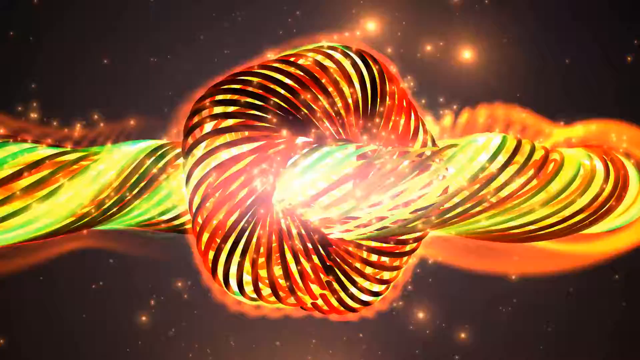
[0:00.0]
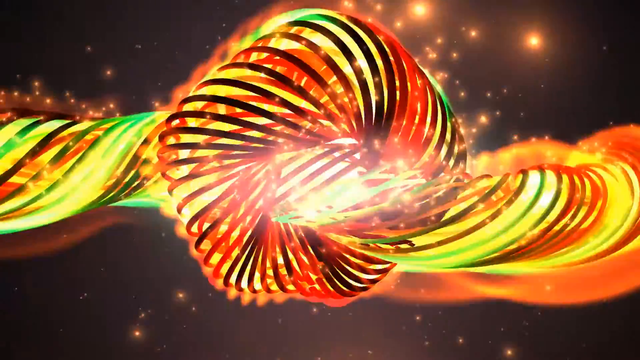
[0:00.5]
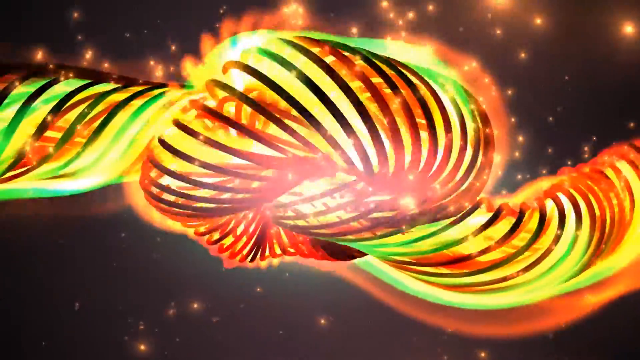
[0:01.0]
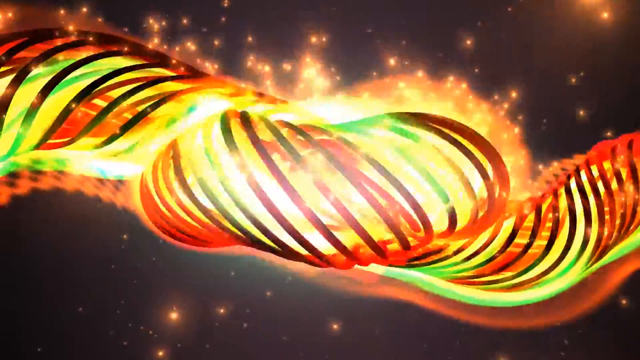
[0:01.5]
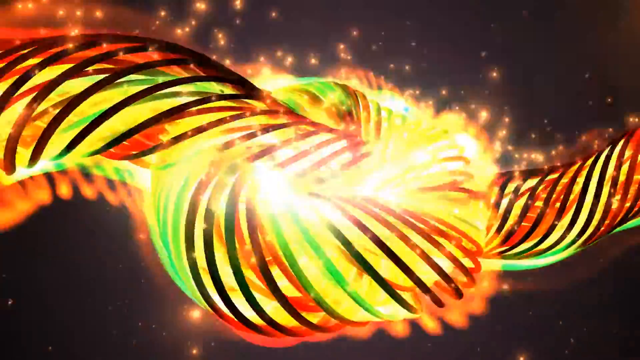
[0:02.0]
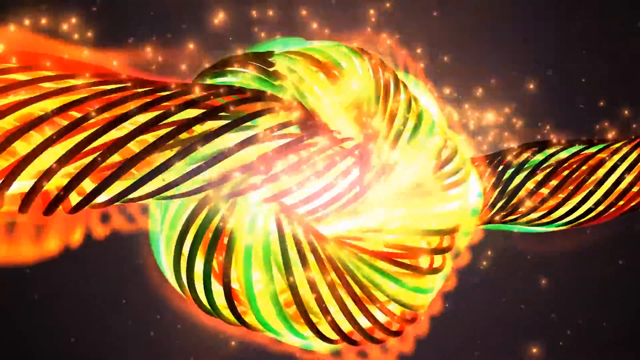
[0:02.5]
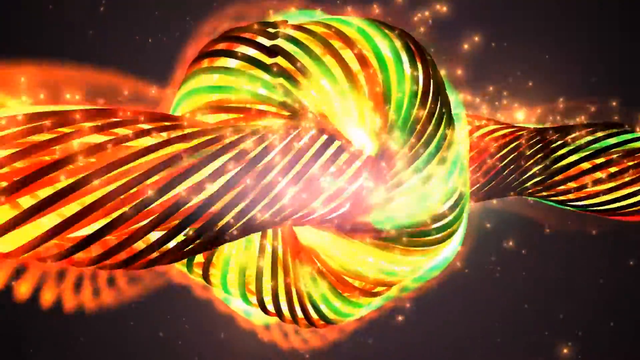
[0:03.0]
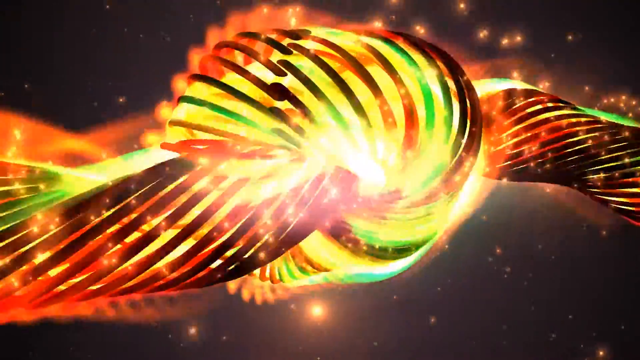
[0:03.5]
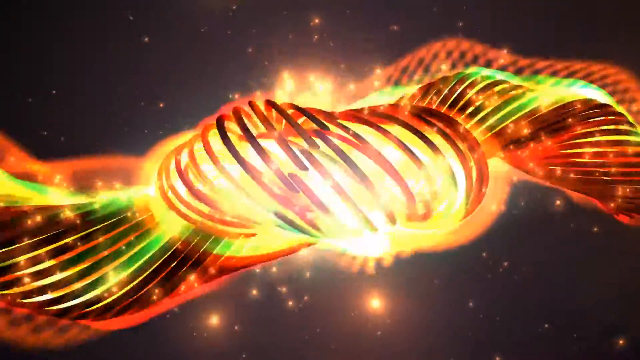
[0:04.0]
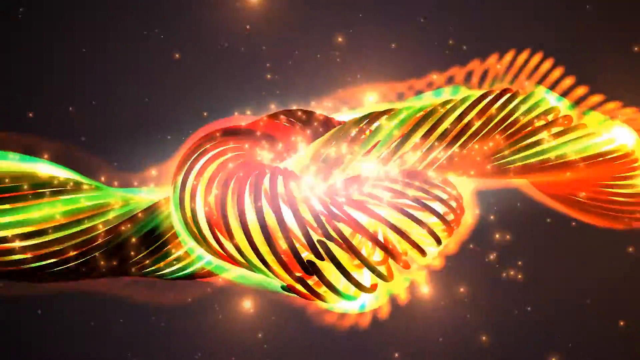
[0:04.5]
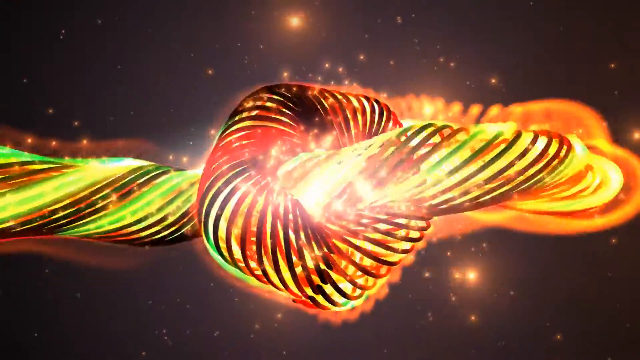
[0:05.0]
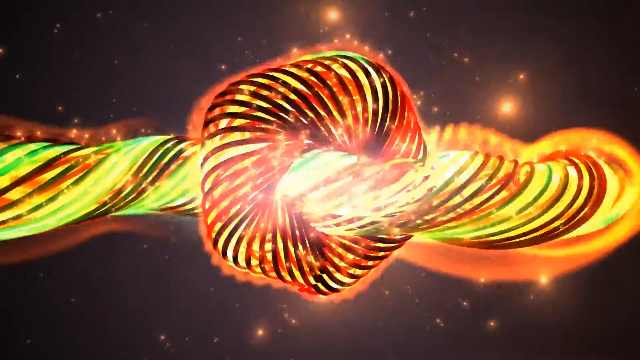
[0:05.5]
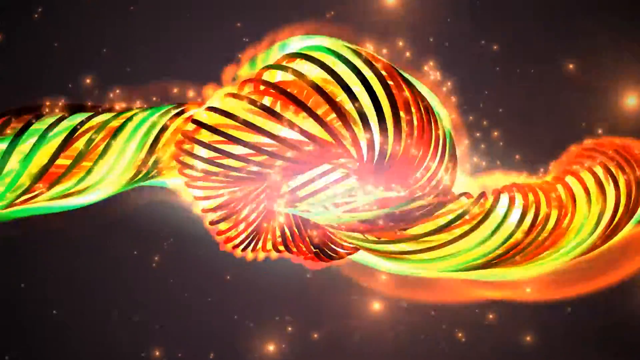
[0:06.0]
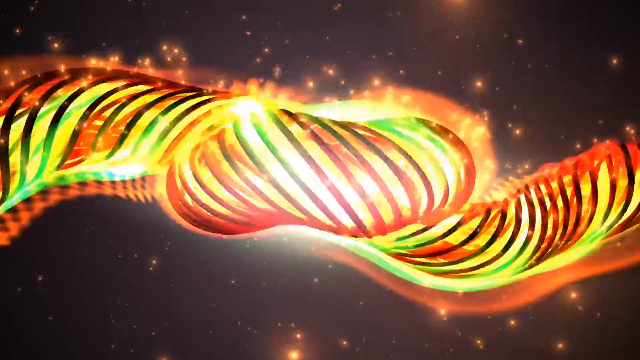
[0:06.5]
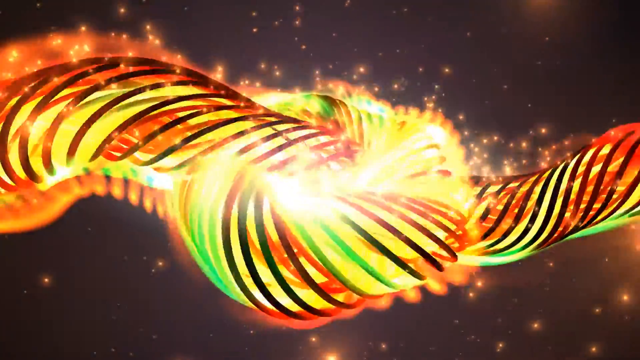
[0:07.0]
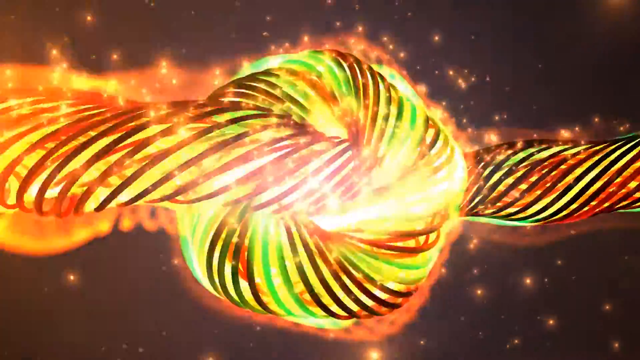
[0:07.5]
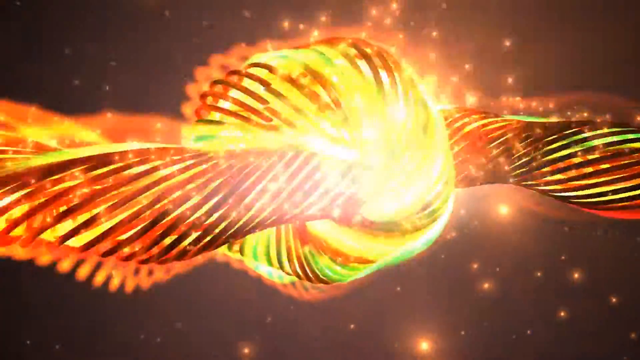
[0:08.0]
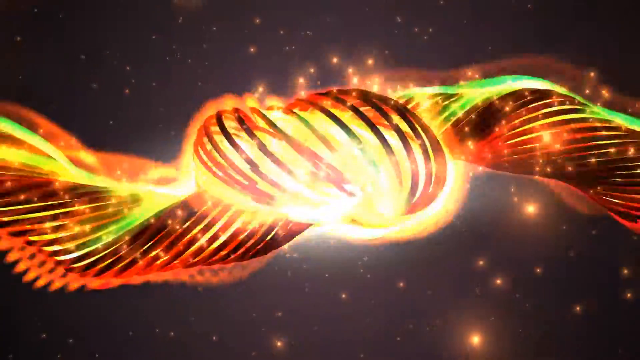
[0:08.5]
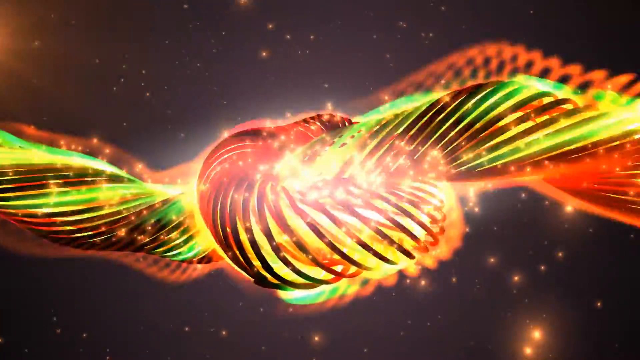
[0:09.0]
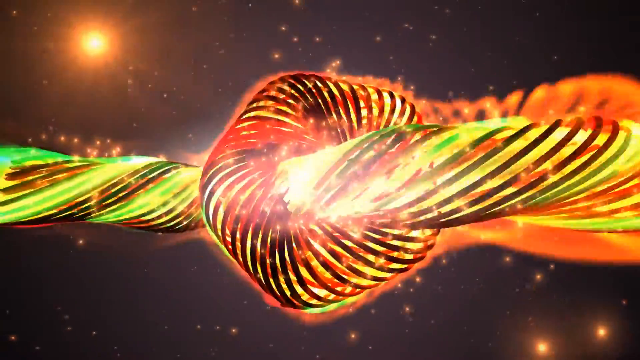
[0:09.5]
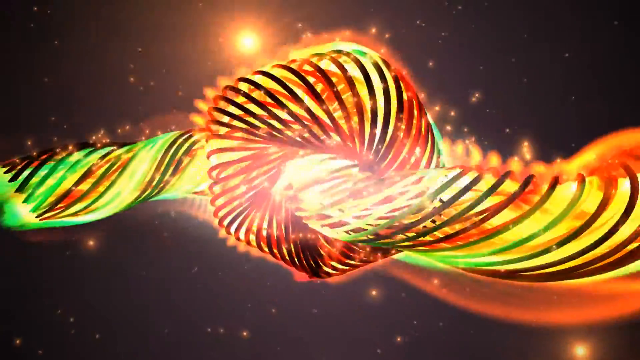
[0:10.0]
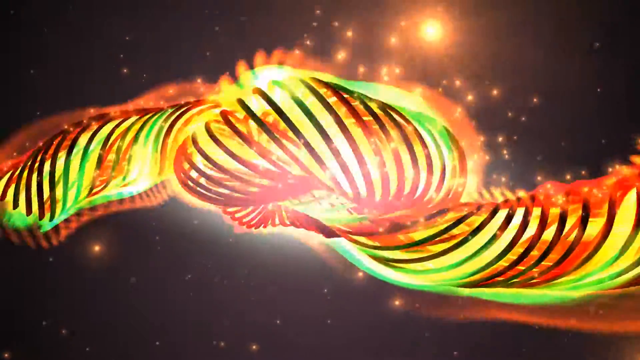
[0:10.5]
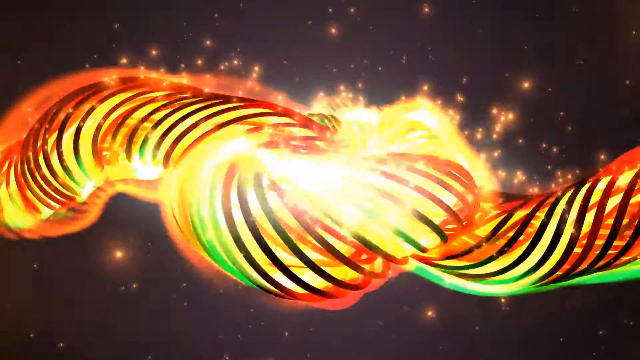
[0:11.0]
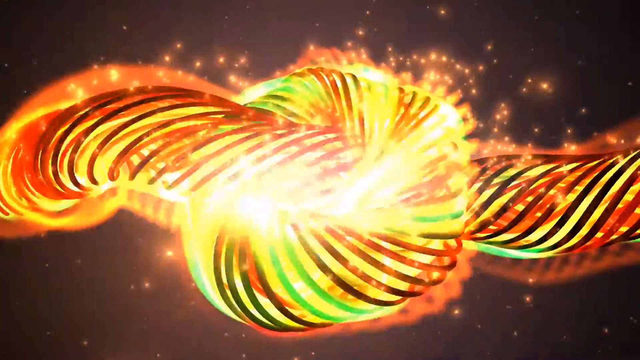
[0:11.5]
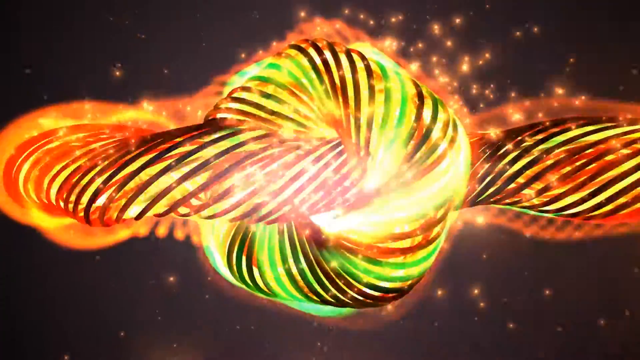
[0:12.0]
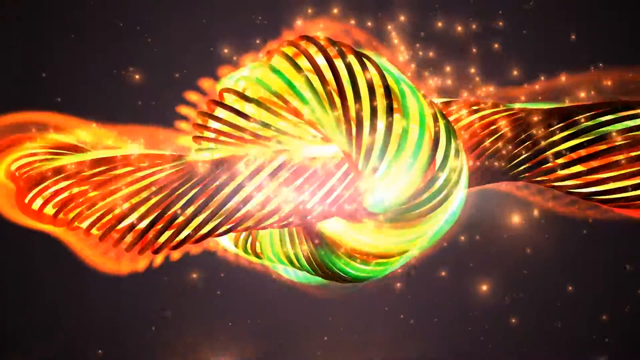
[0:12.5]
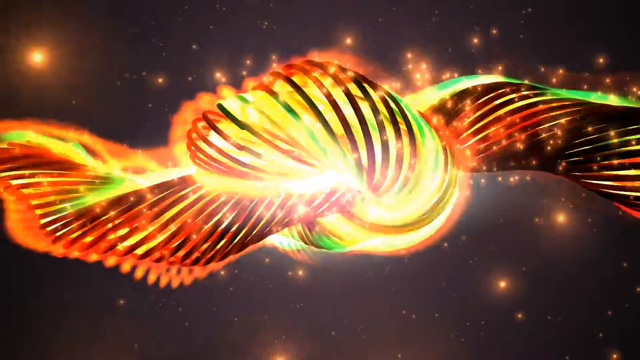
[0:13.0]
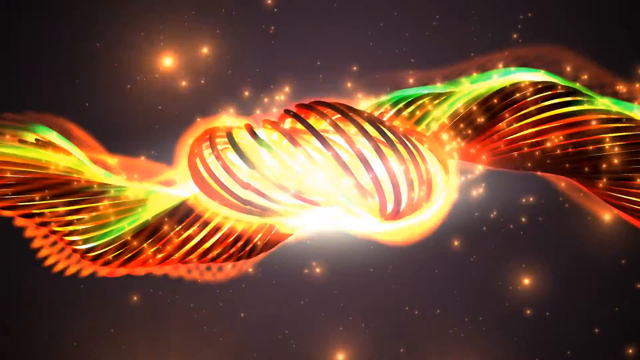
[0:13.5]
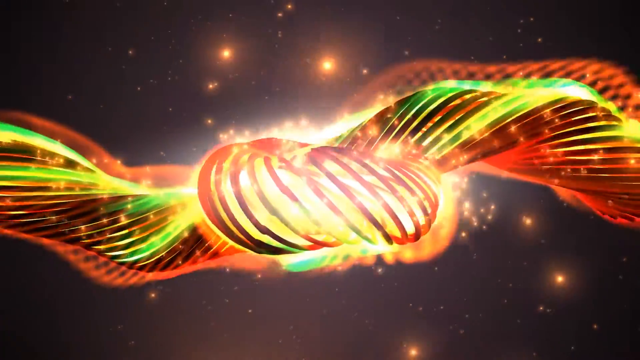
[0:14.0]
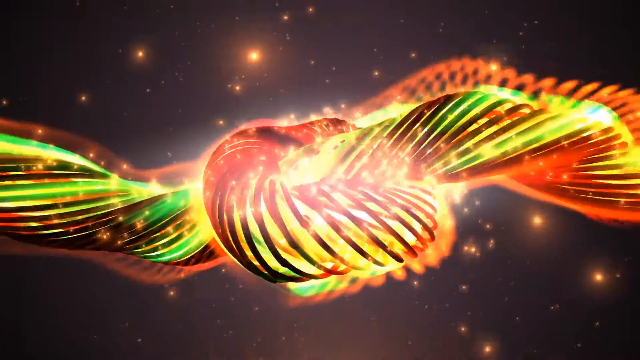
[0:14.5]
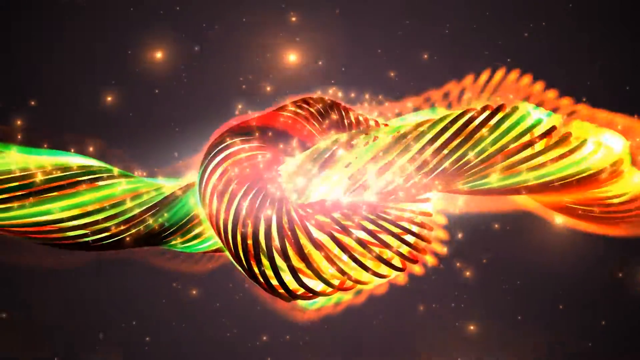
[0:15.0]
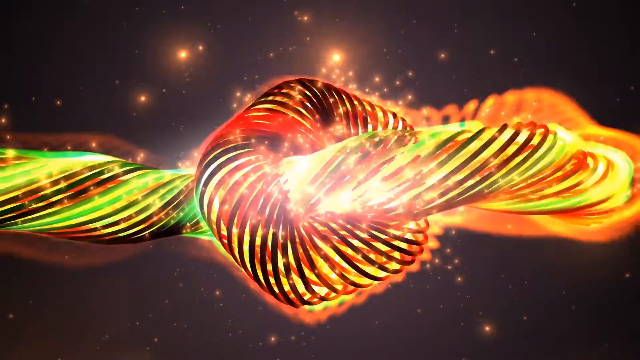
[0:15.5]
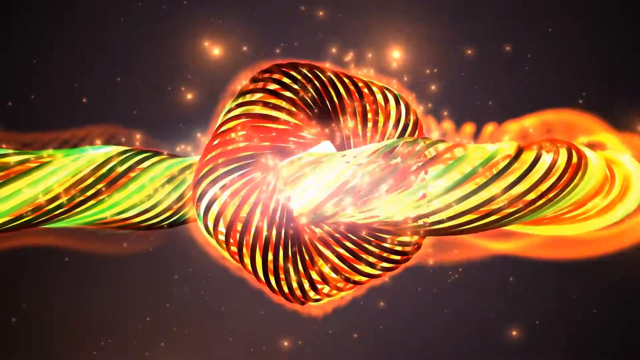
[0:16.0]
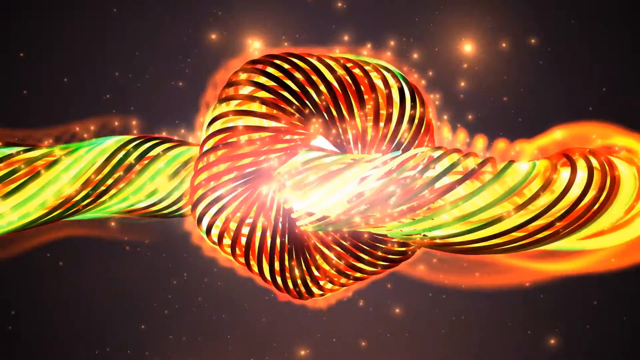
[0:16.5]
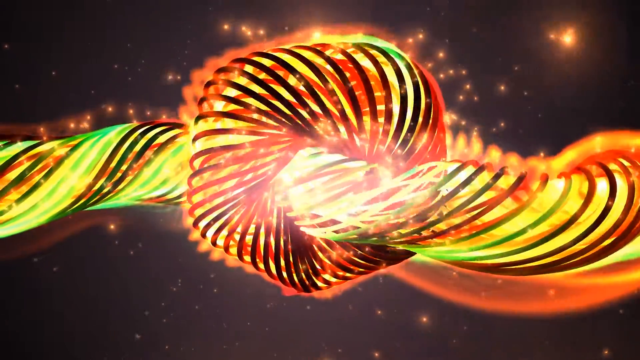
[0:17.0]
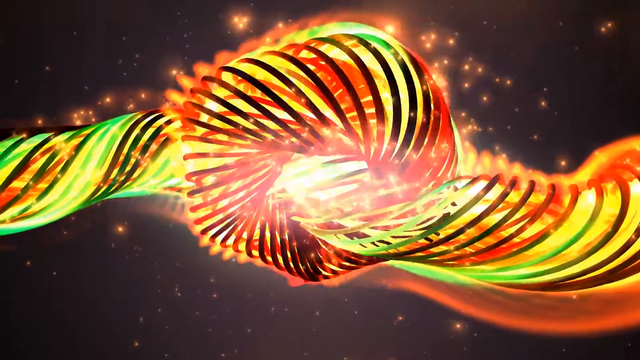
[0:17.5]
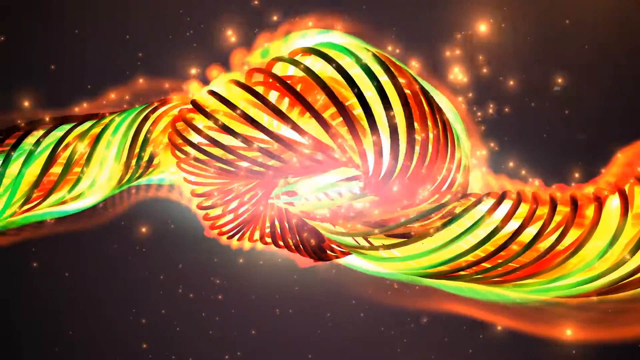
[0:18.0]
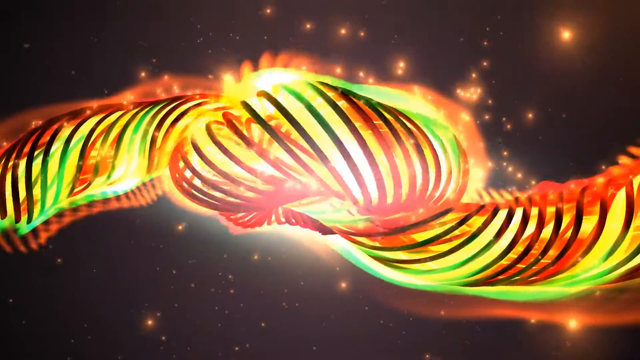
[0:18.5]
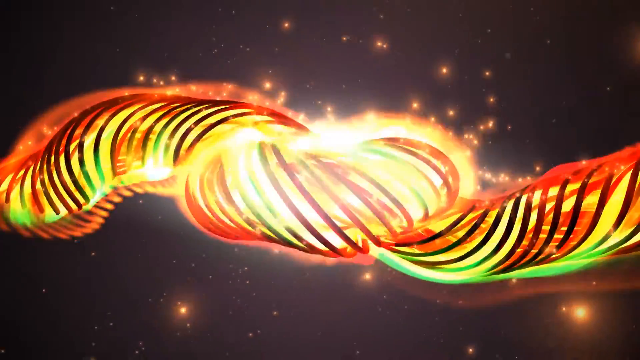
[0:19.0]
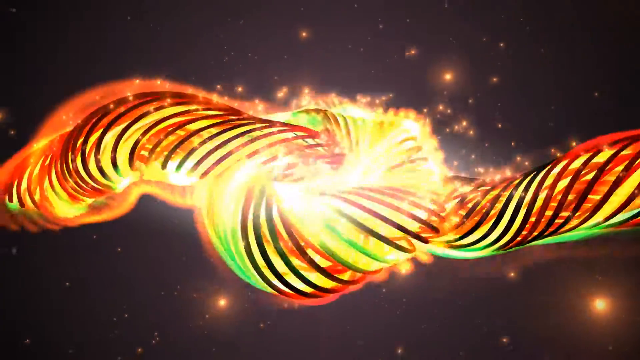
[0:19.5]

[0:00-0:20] Against a black background that looks almost like space, small yellow dots are kind of scattered throughout; some are really small, like the tip of a pen, and some are a little bigger. Going across the frame is a green glowing substance that looks like it has little coils wrapped around it, in green, black, orange, red and green. The coils go up from the left side, over and around the back, coiling all the way around it. In the center, it passes through a circle that is kind of flat on the sides, more like a pentagon, which contains the same kind of yellowish-greenish substance with wires wrapped around it, leaving just a little gap between each of them. The piece running left to right goes through it, and on the outside of both the left-to-right piece and the middle one there is kind of a small orange hue glowing. As the video plays, it spins: the coil on the left side goes up while the right side goes down, in kind of a twisty motion. As it spins, the piece it passes through turns, its top coming toward the camera, then going down and under and back over. It lights up a little brighter orange on the left side, and more sparks kind of fly off as it twists. When it twists, the left side gets a little closer and the right side a little farther away, and they switch back and forth as it rotates.